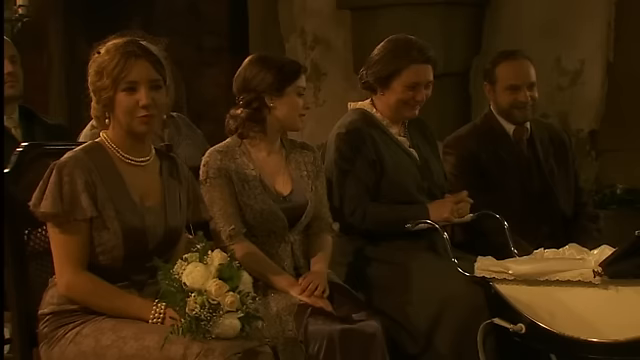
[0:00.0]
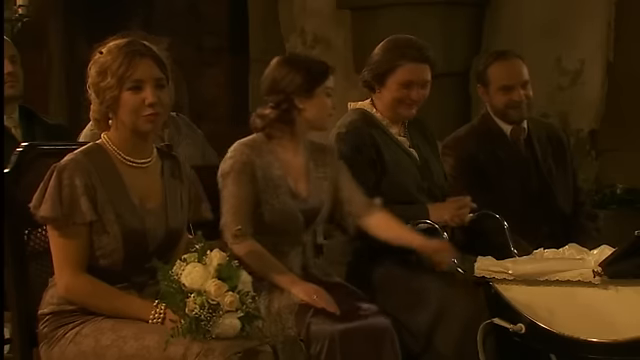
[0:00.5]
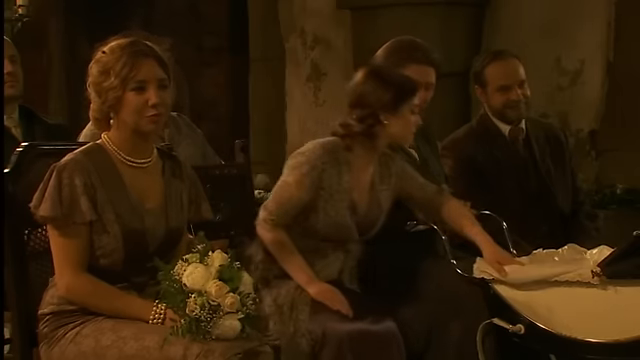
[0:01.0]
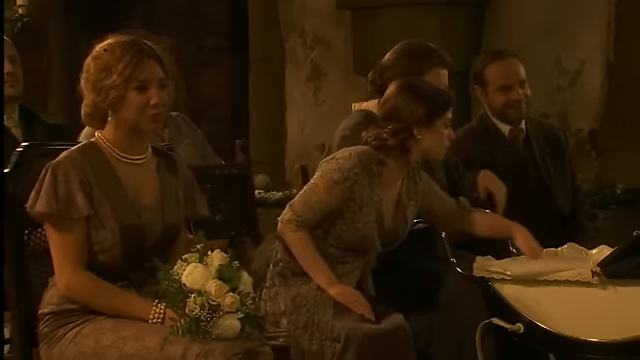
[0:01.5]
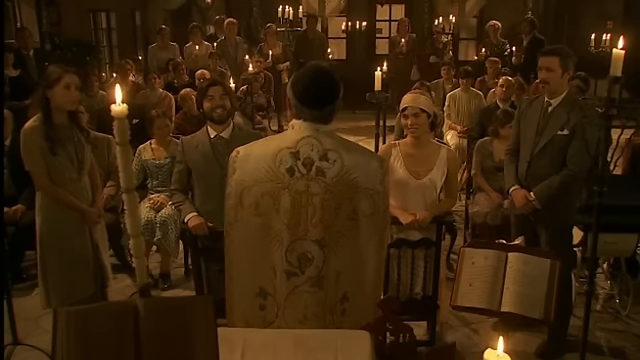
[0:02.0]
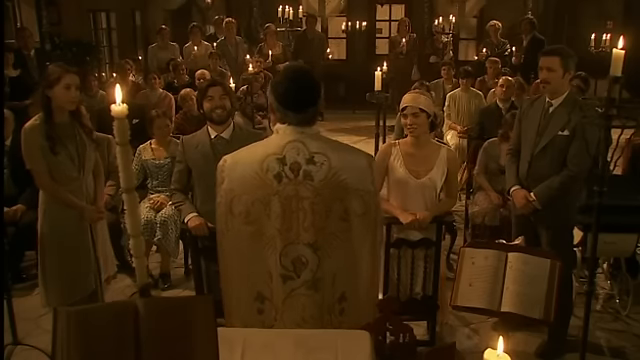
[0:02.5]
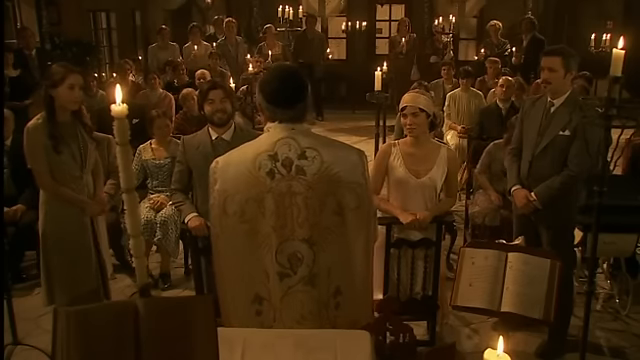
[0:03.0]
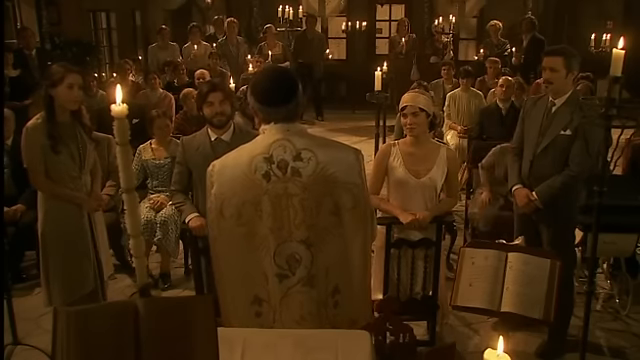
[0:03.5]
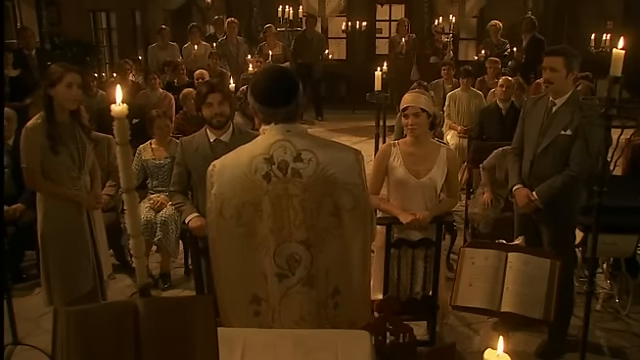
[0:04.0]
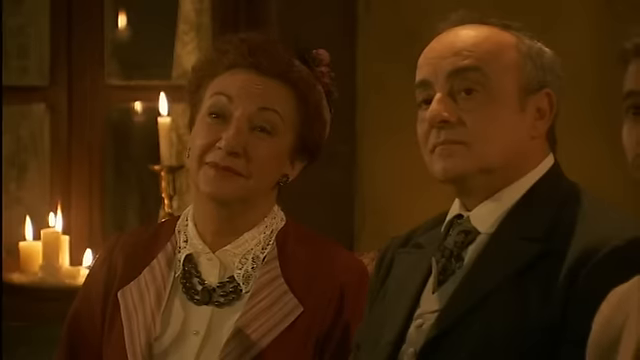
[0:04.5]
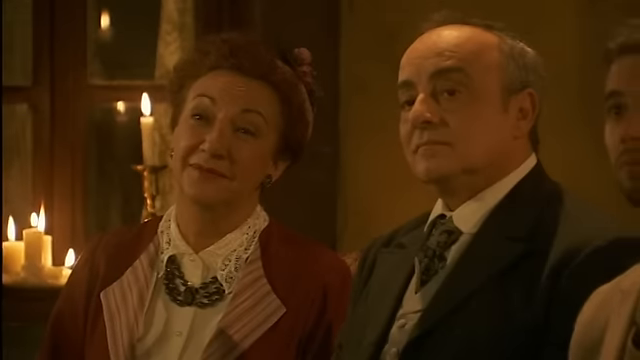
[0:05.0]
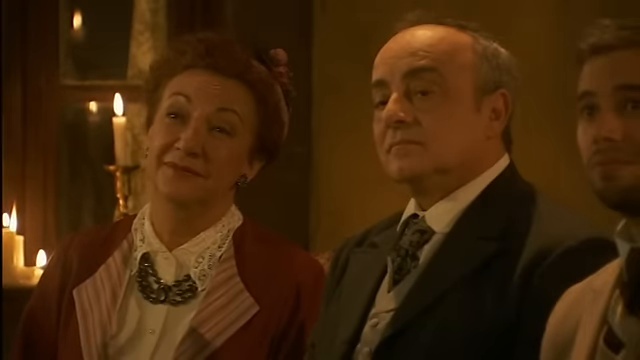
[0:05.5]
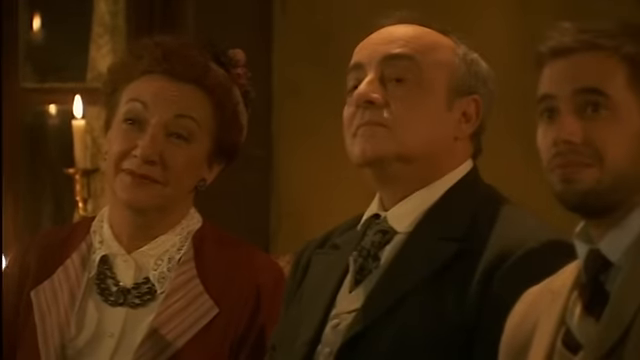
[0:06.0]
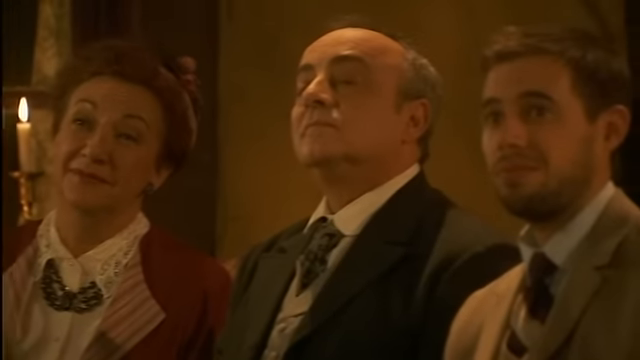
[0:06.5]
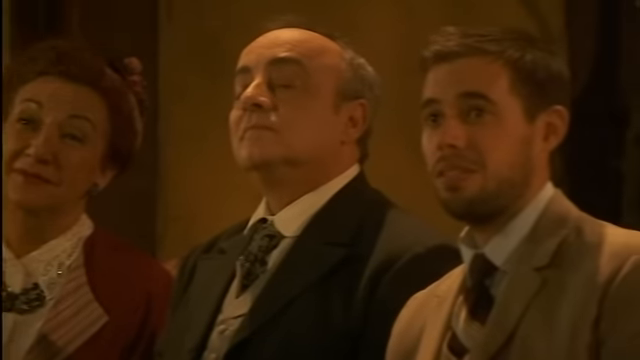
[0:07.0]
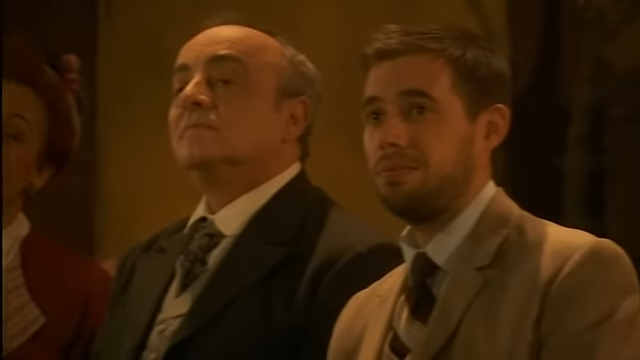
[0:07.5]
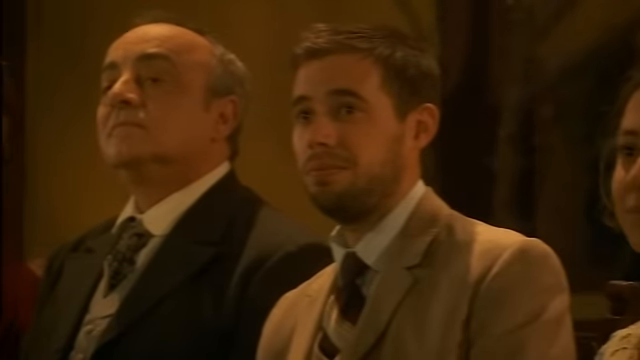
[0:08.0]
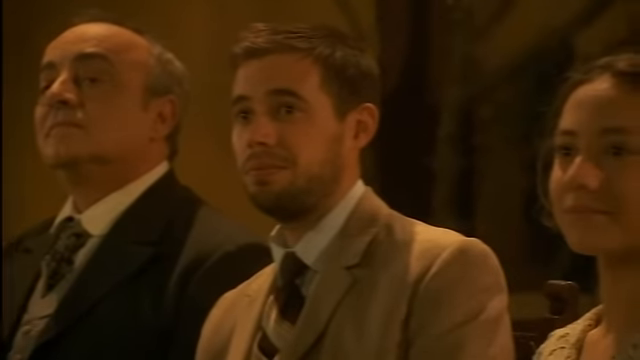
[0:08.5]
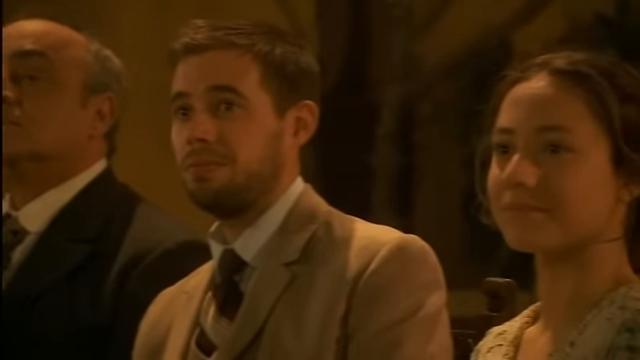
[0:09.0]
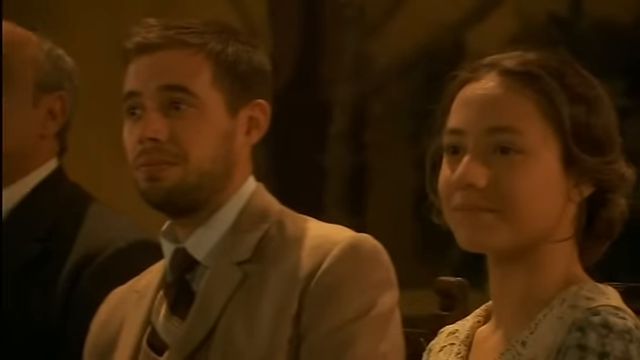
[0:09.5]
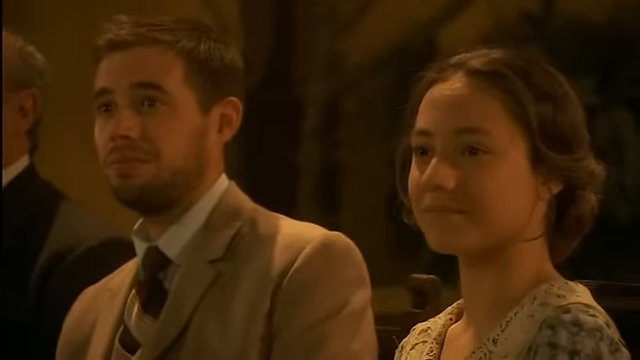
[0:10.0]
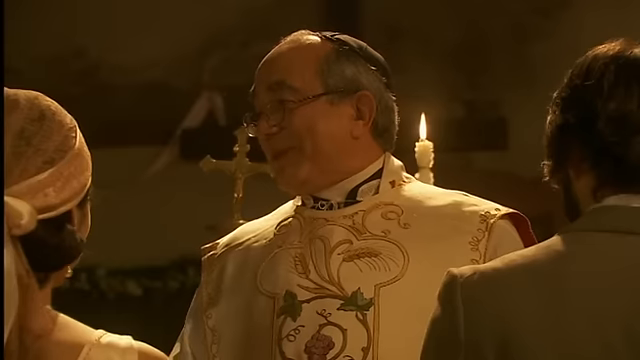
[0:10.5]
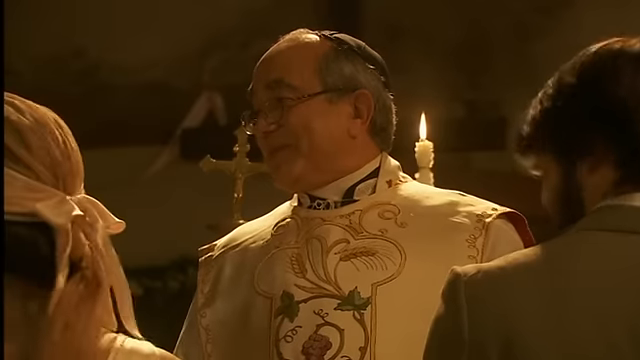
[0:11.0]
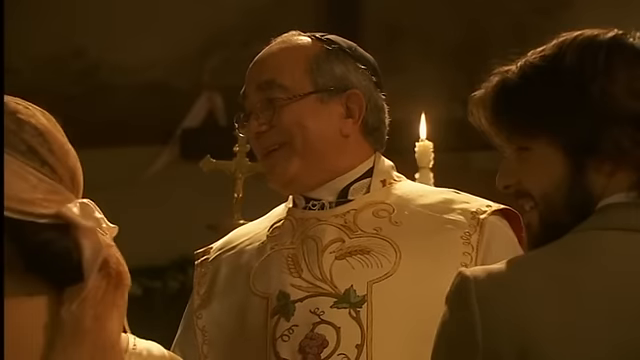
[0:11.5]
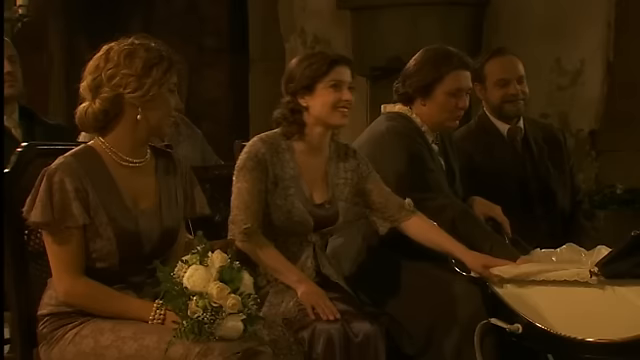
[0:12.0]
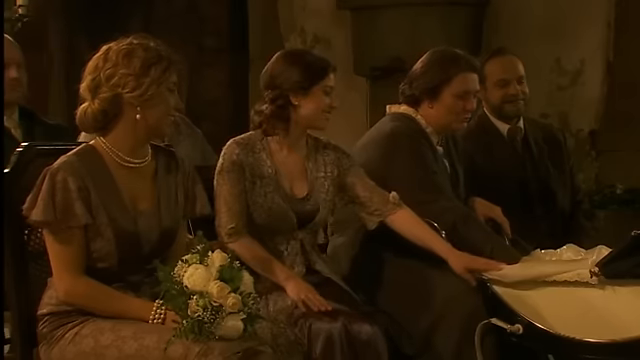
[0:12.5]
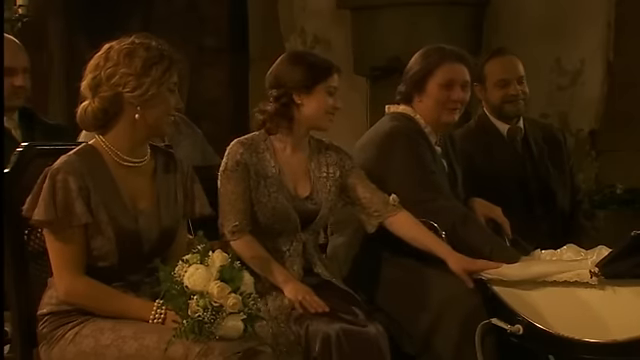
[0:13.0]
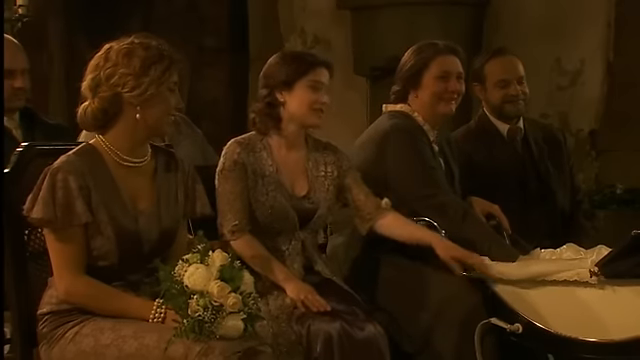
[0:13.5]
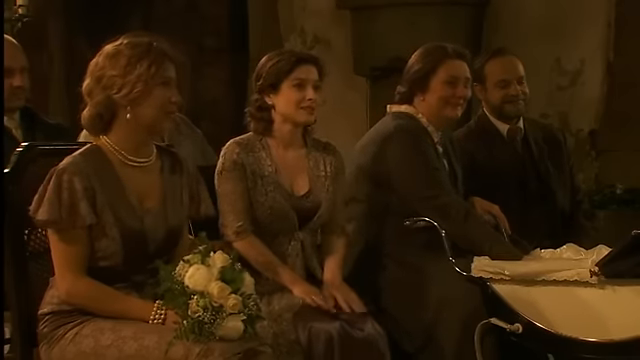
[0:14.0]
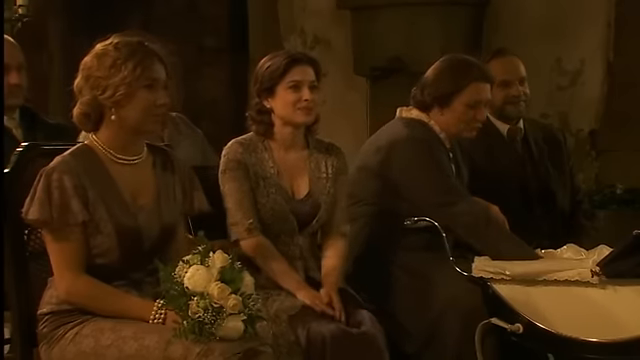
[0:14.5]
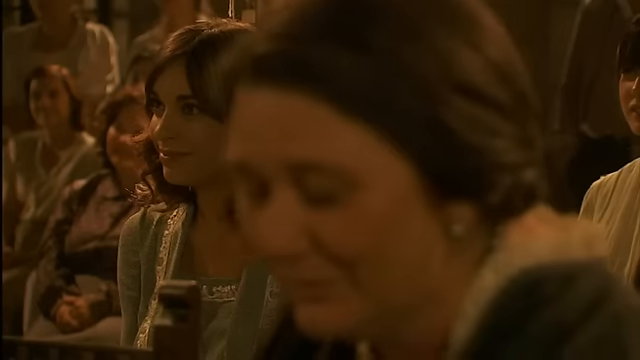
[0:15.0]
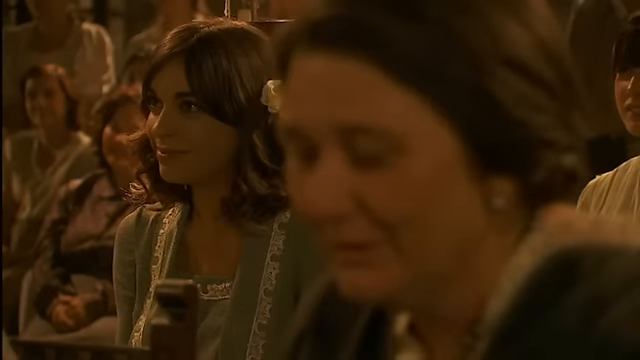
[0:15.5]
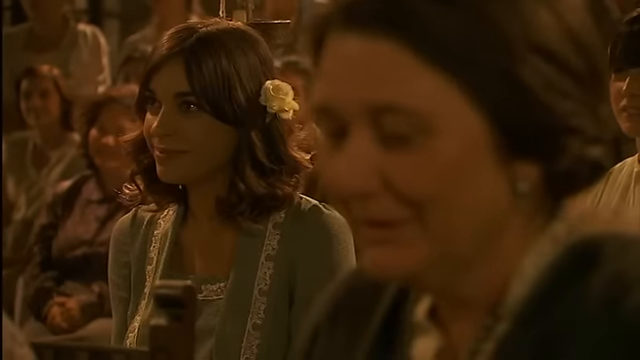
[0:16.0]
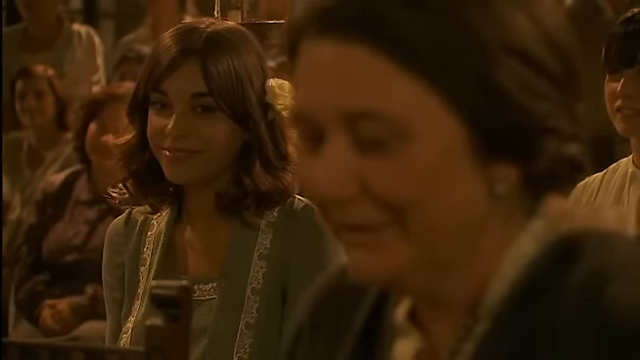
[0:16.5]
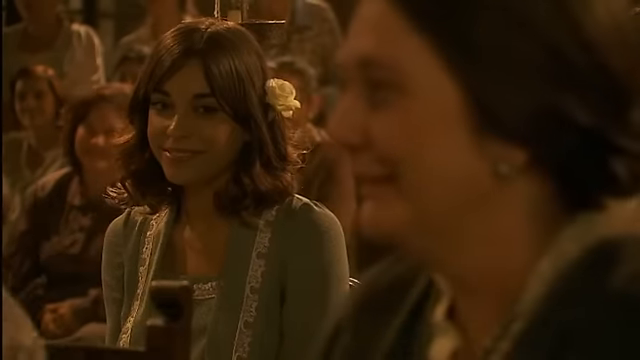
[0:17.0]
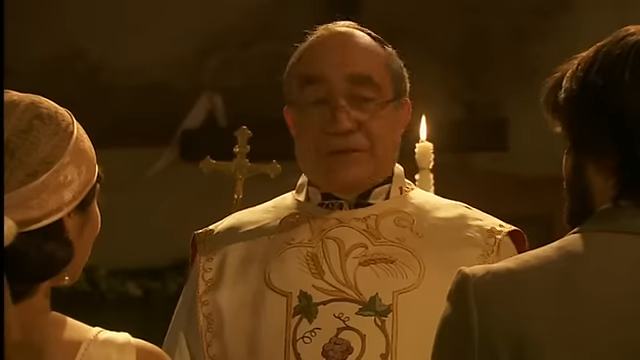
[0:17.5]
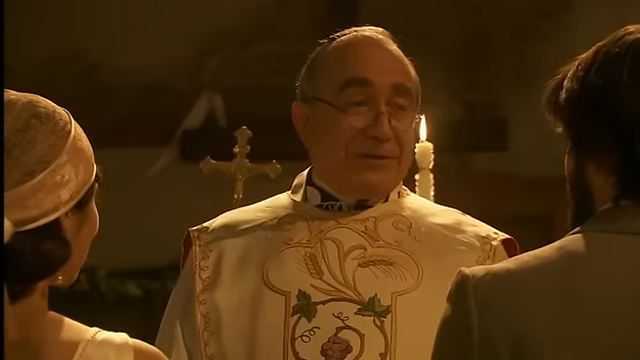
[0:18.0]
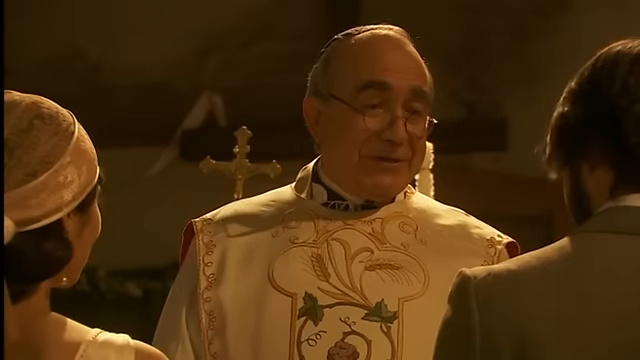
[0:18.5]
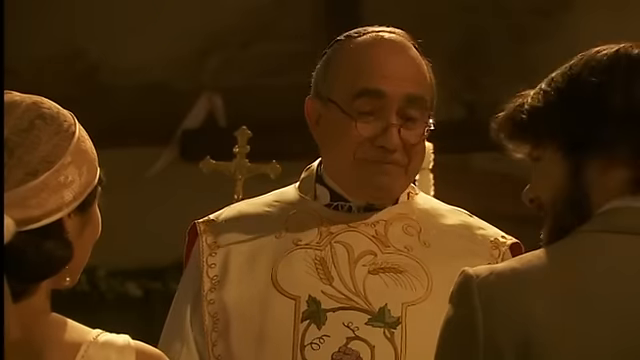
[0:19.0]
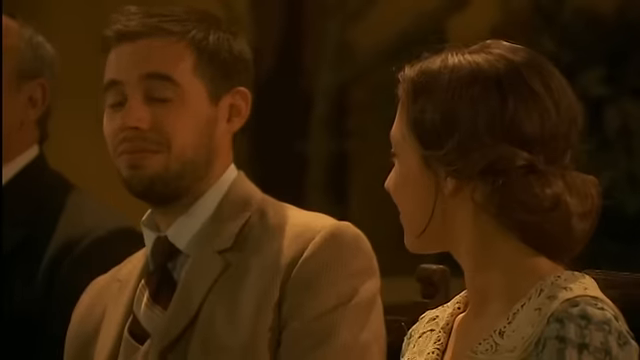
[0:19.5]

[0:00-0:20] The scene opens on four characters sitting down; the third lady in the line has a nurse with a baby stroller in front of her. The setting is from a different era, possibly the Victorian or Gilded Age. The lady in the middle reaches over toward the baby carriage and starts reaching into it. The scene then opens to a priest standing at the head of what looks to be a congregation, with maybe some sort of wedding going on. A candle about three feet long is by his left side, and an entire crowd of people looks at him, three people standing at the front and most of the congregation sitting down. The camera goes through faces in the crowd, starting with an older ginger lady and her balding husband and ending with a young man and a young lady looking on in what looks to be a loving way. It skips back to a front-facing view of the priest, wearing what looks to be a yarmulke with his robes; two people stand in front of him wearing a slight headdress, and the male wears a tuxedo. The shot returns to the lady with the baby, and the priest seems to be asking her some sort of question. Then the priest is back speaking in front of the people, and the shot ends with two people in the back looking at each other.